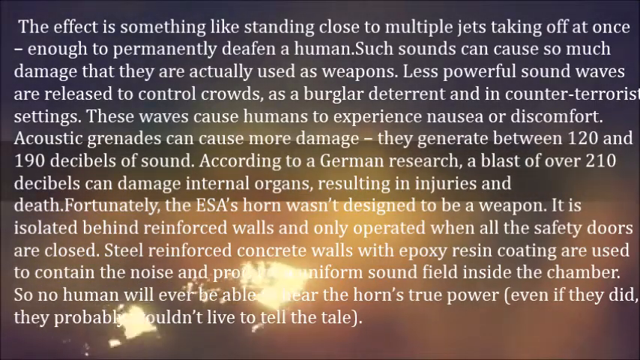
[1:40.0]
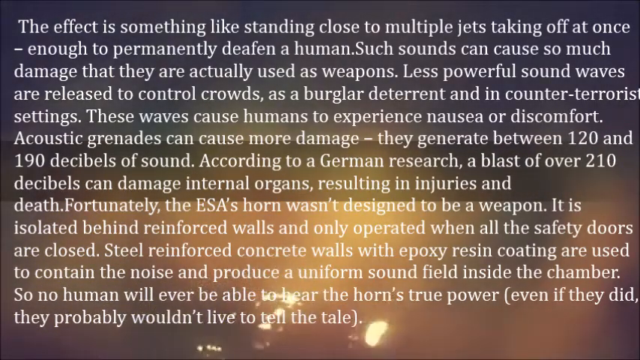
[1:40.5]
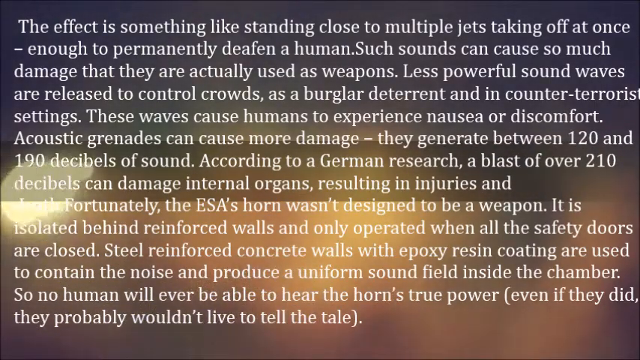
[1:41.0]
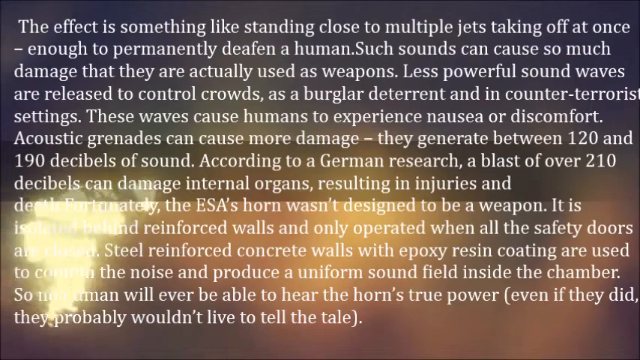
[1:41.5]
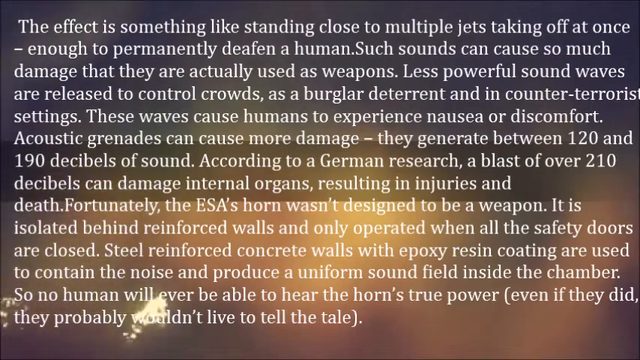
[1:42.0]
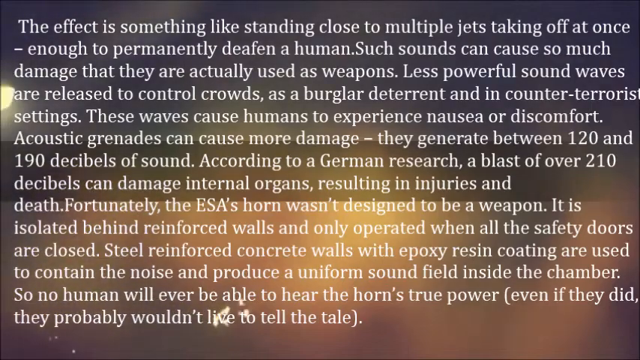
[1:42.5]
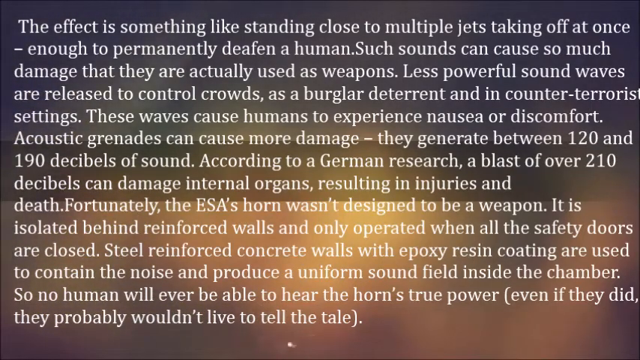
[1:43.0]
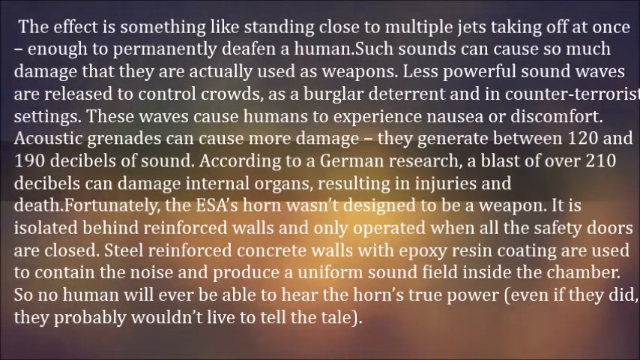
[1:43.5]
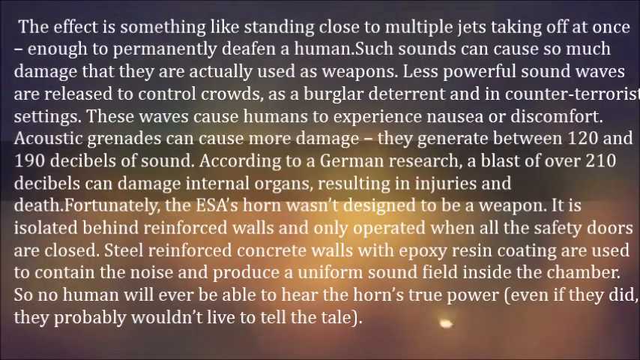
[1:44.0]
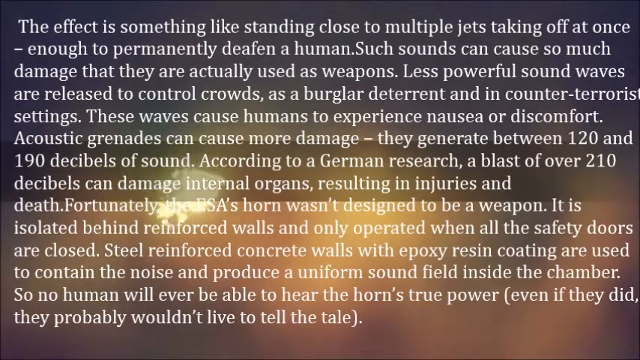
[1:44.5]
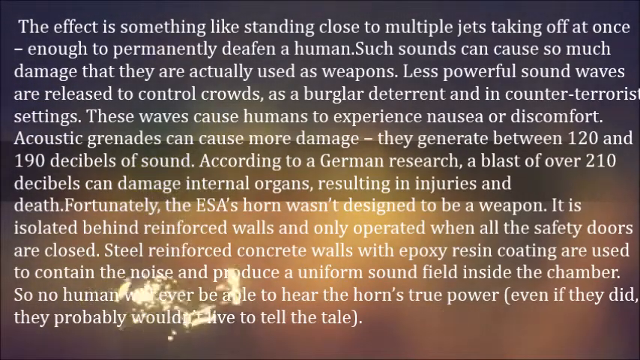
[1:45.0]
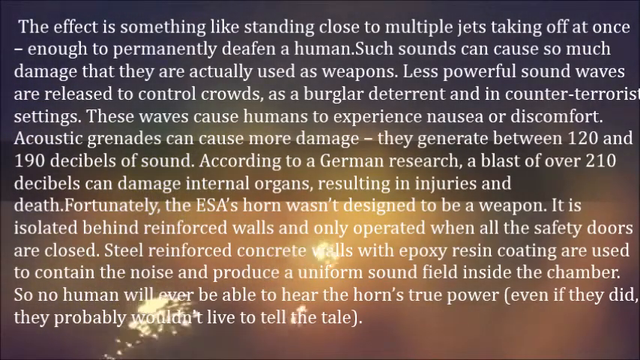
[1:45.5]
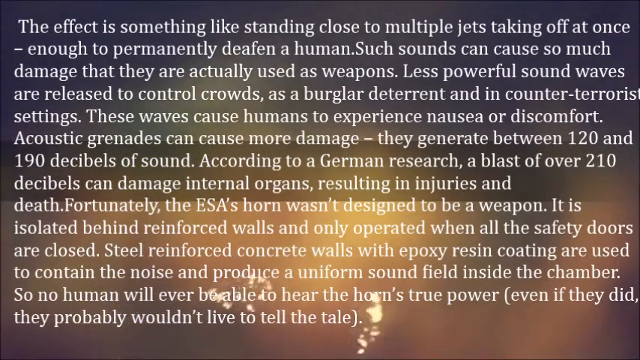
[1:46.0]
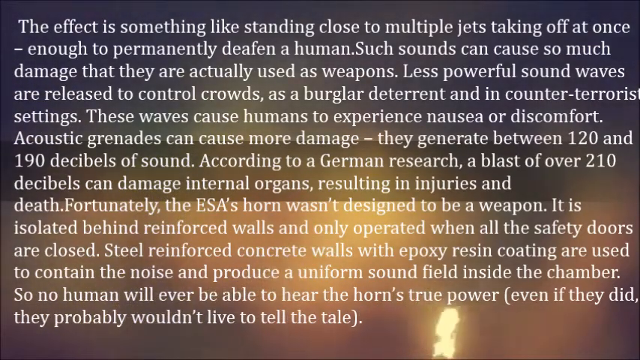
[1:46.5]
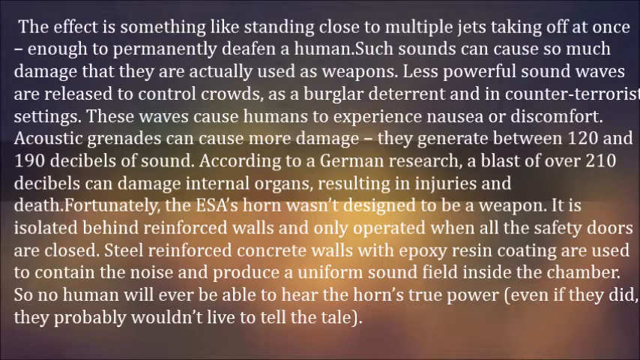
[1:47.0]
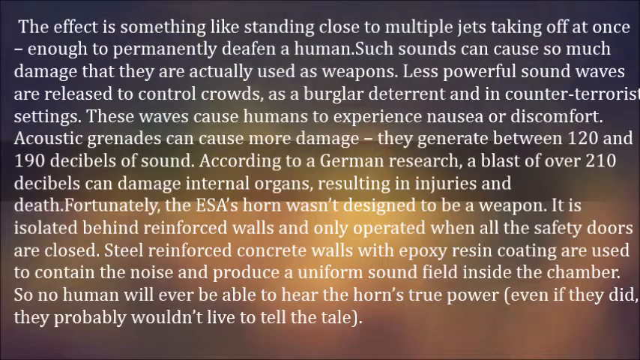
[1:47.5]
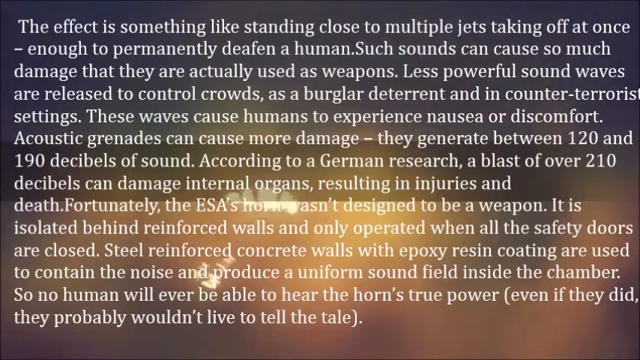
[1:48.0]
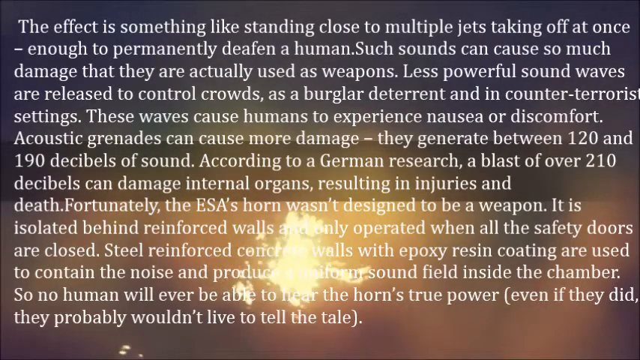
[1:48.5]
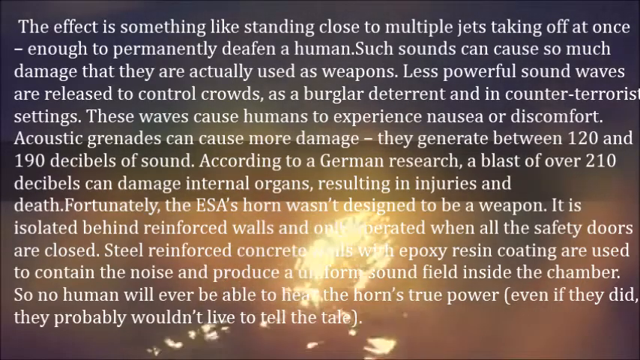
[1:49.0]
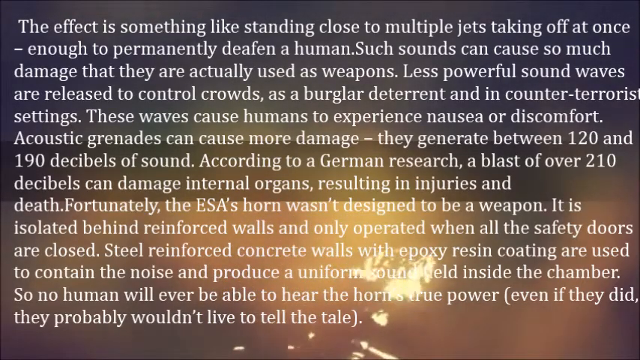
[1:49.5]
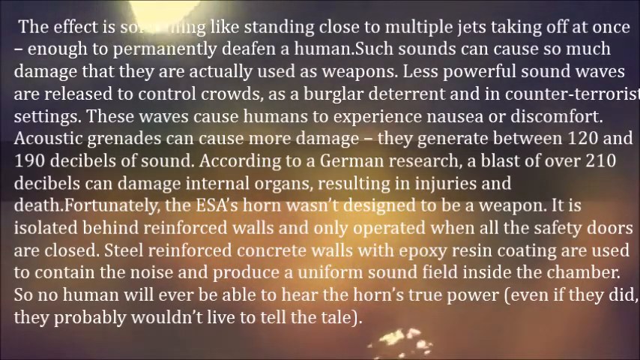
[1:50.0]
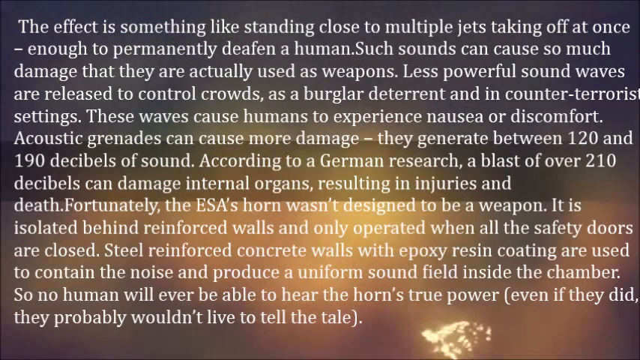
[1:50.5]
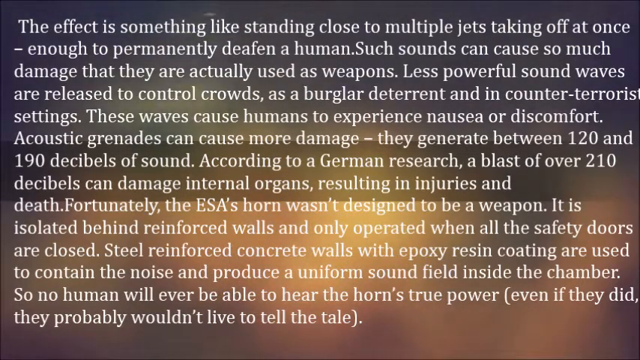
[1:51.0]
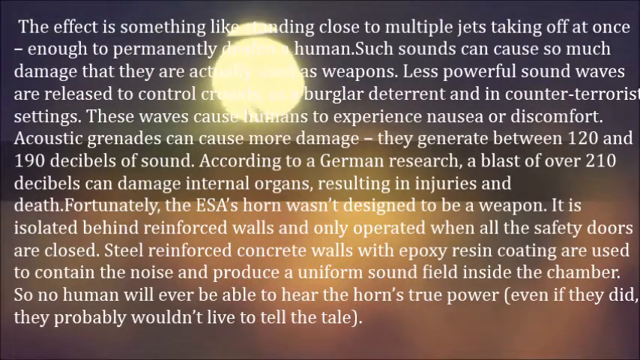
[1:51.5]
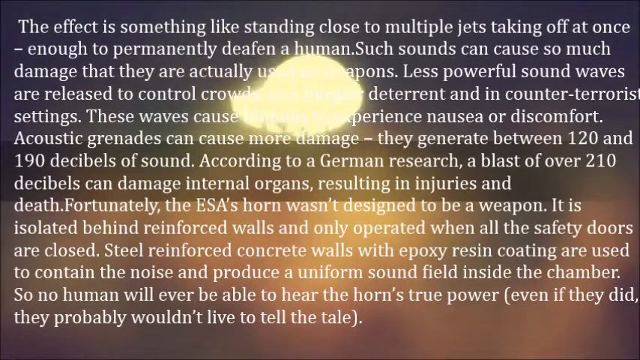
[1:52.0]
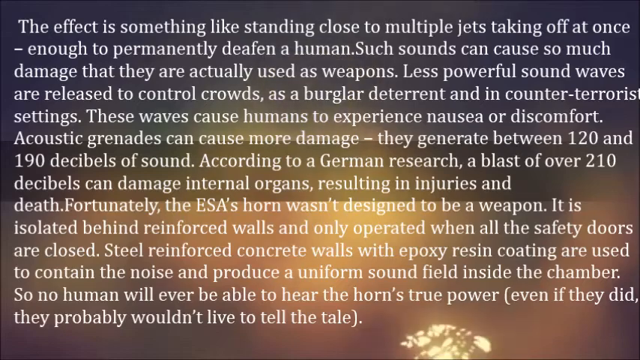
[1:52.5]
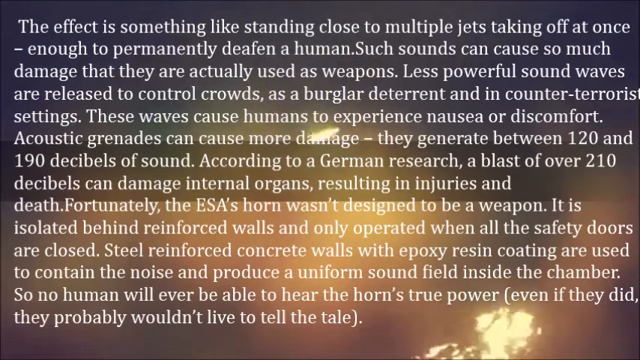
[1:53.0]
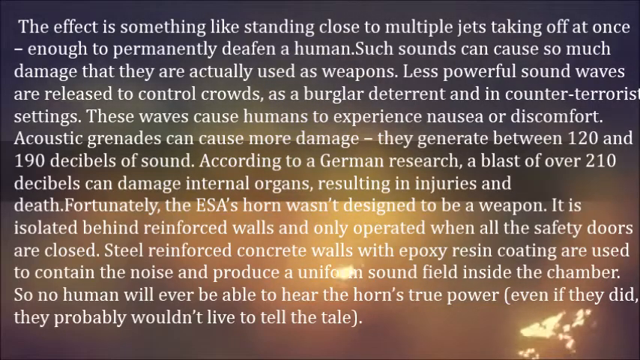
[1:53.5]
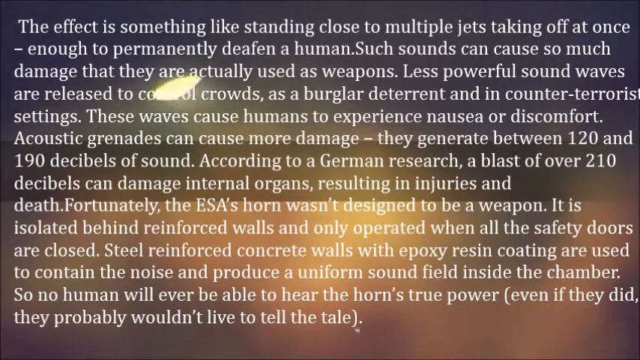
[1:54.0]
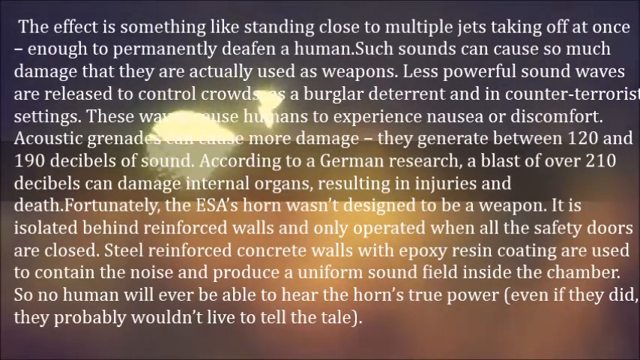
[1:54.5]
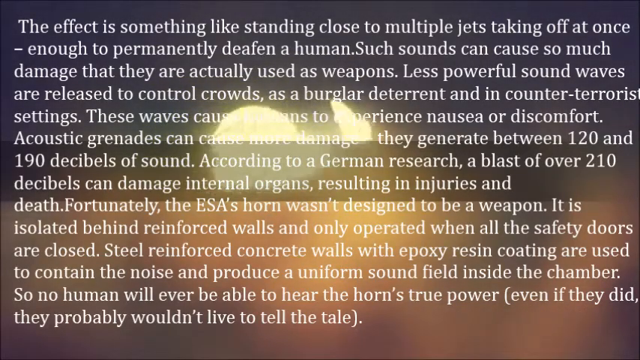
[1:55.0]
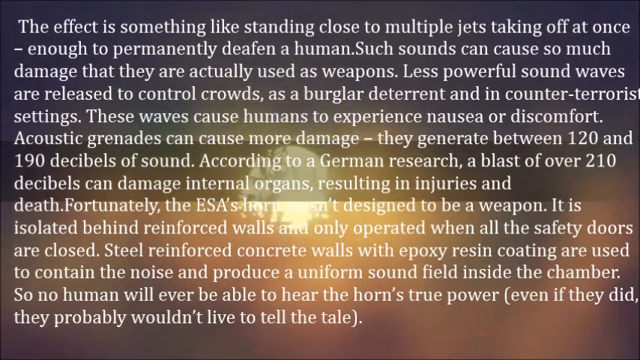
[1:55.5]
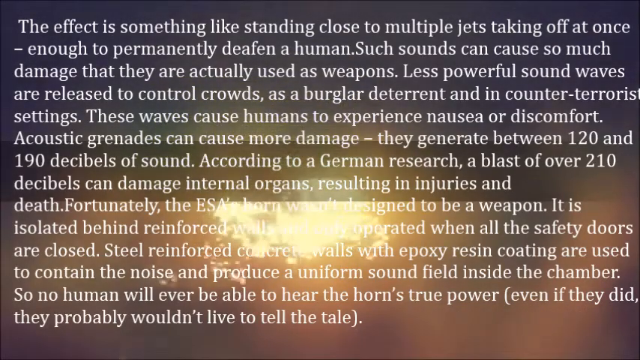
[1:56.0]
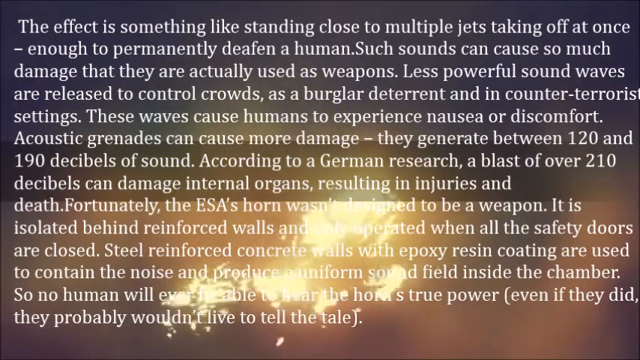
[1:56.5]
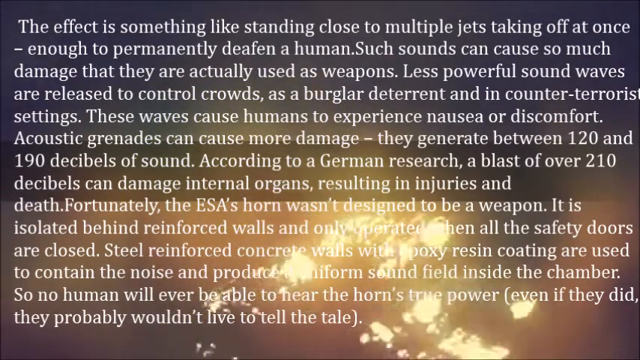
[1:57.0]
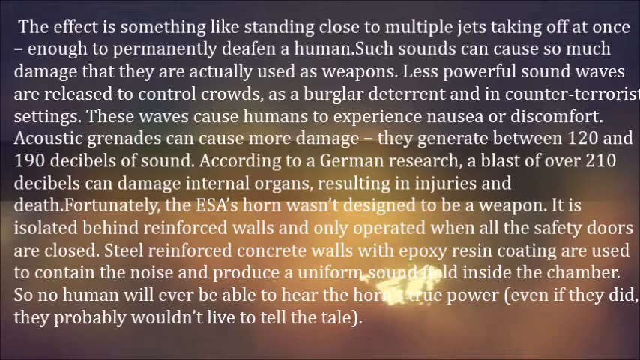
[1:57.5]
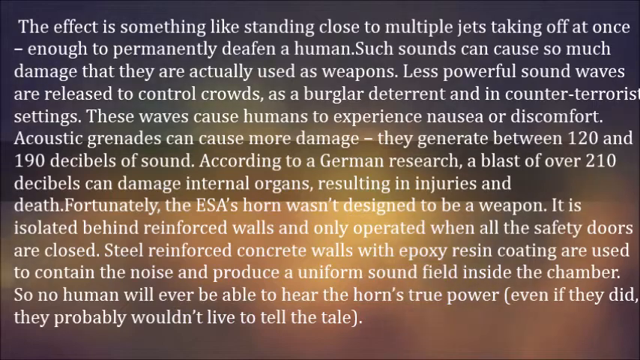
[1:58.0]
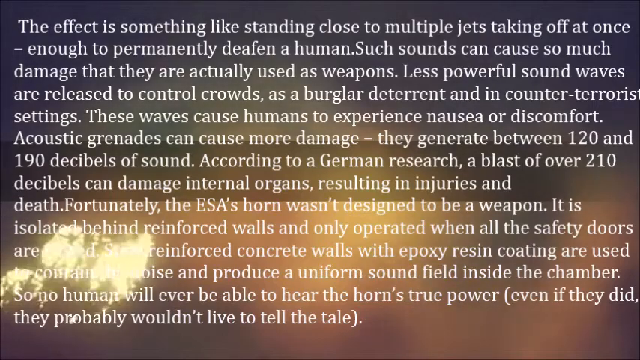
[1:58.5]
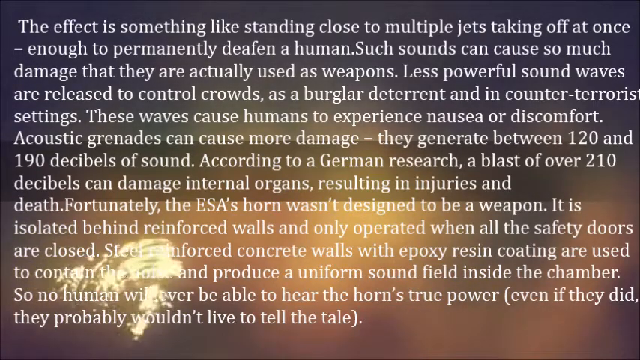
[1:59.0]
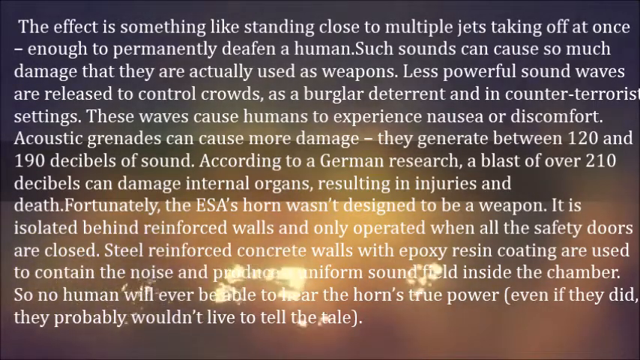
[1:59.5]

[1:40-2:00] The same paragraph is shown, comparing the horn's sound to standing close to multiple jets taking off at once, noting that such sounds are used as weapons, including against burglars and in counter-terrorist settings, and that these waves cause nausea and discomfort.